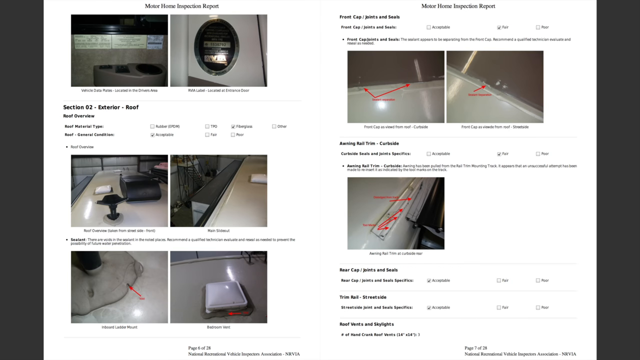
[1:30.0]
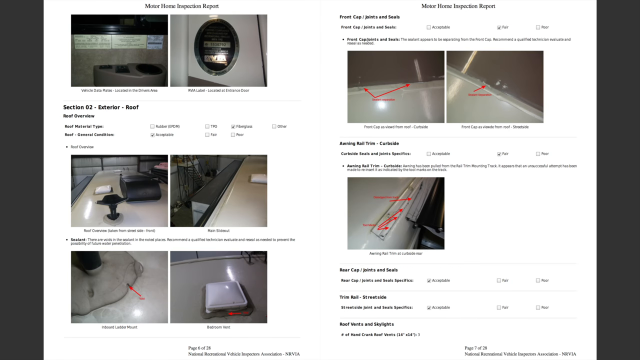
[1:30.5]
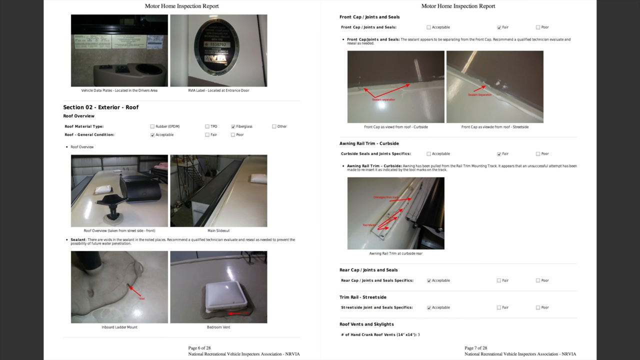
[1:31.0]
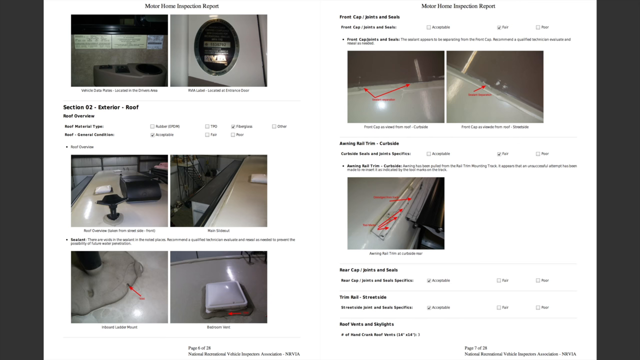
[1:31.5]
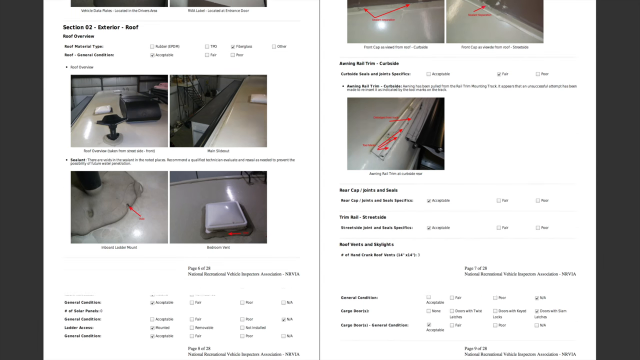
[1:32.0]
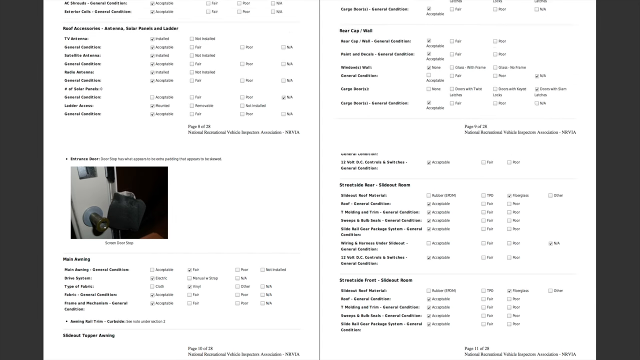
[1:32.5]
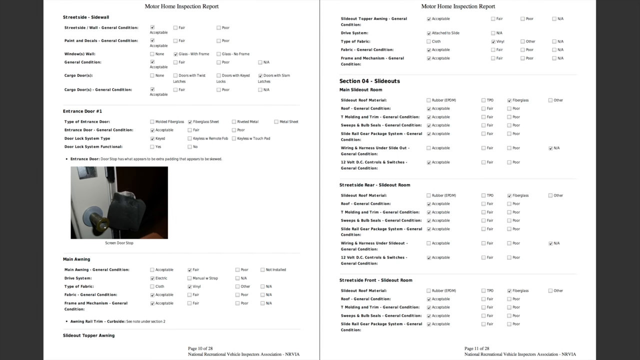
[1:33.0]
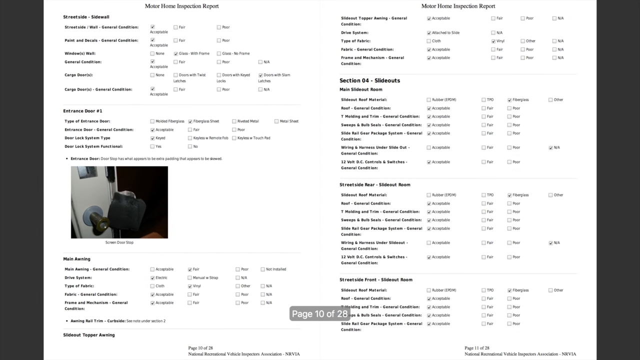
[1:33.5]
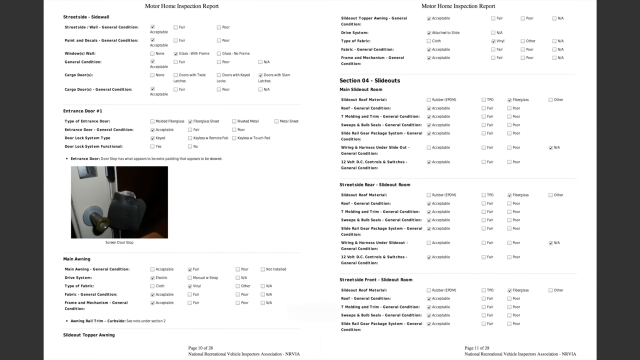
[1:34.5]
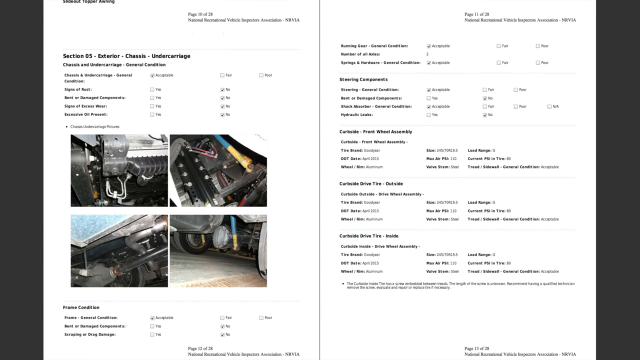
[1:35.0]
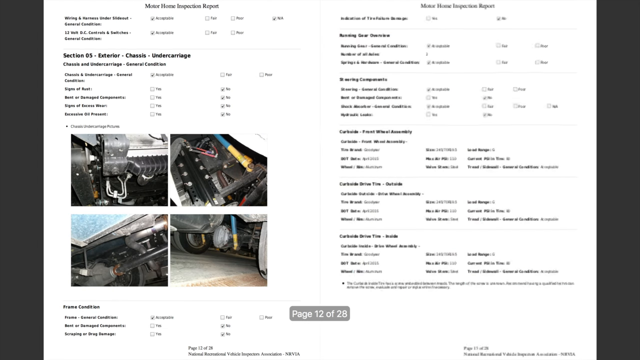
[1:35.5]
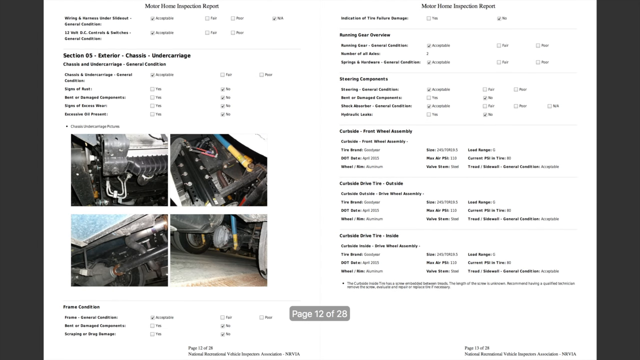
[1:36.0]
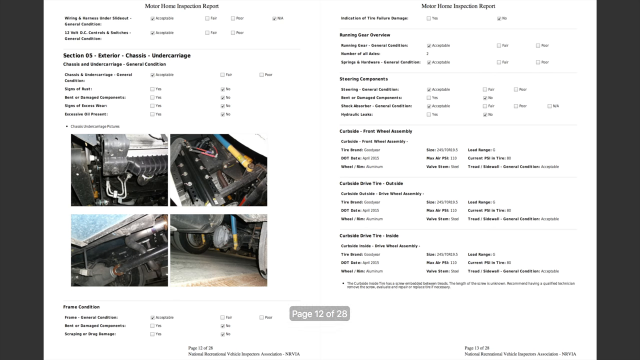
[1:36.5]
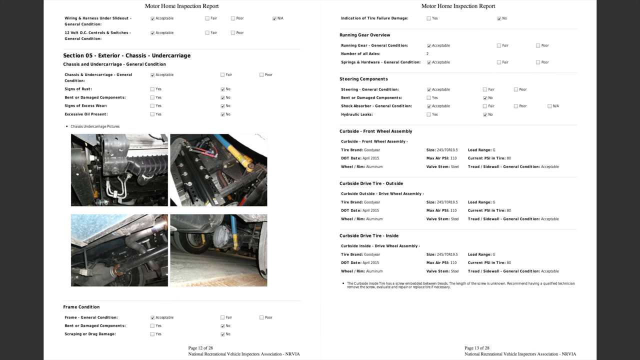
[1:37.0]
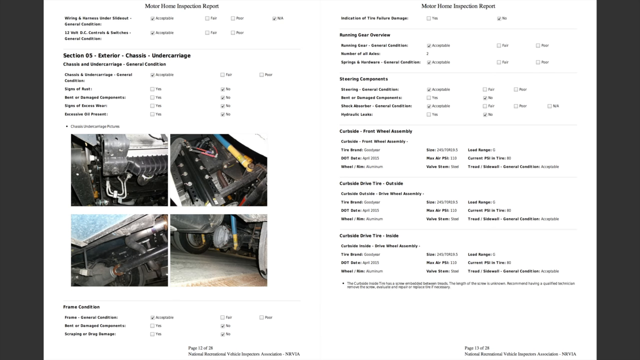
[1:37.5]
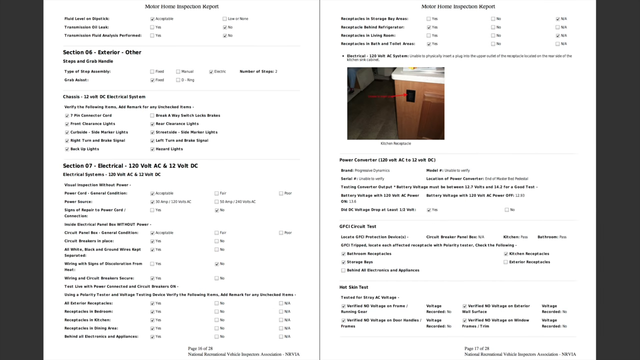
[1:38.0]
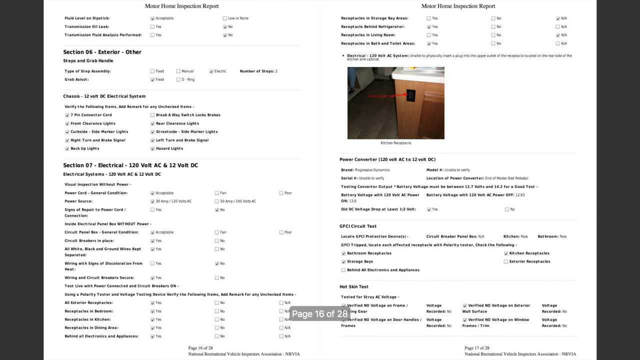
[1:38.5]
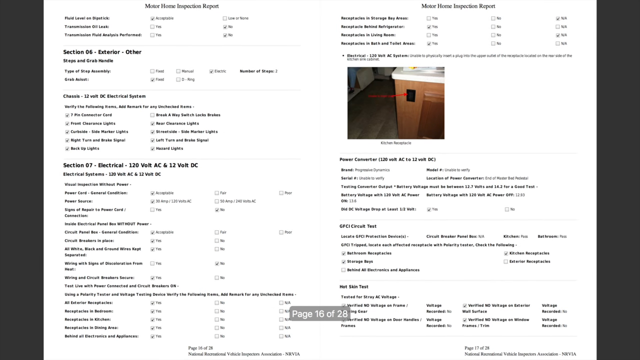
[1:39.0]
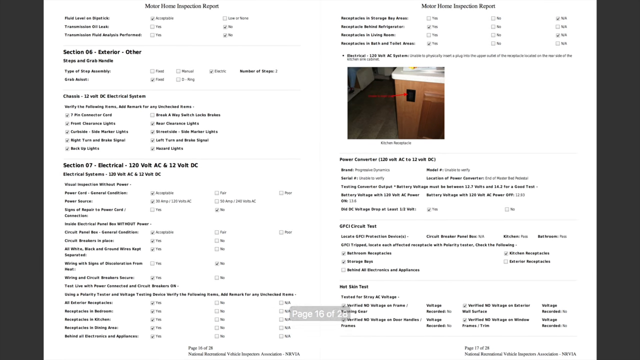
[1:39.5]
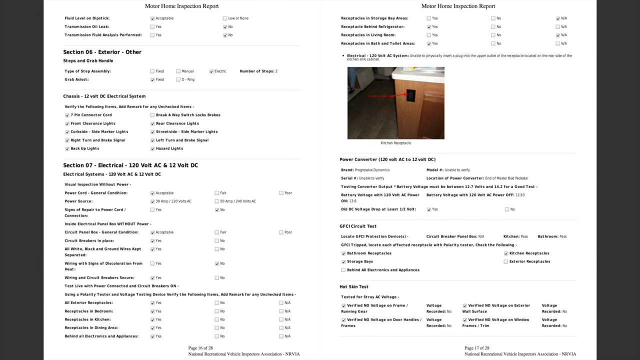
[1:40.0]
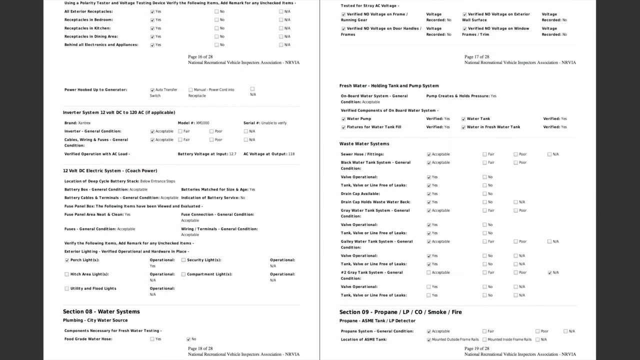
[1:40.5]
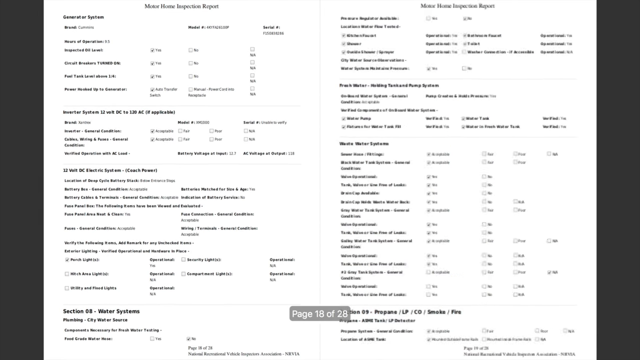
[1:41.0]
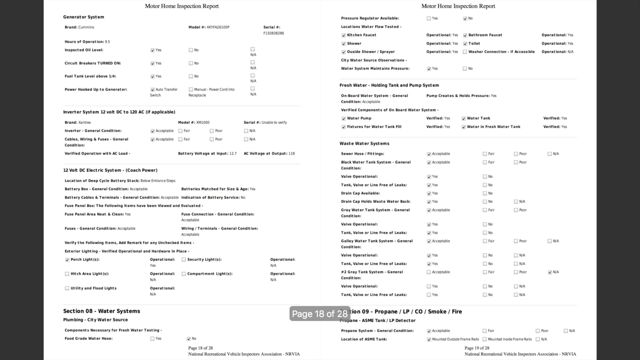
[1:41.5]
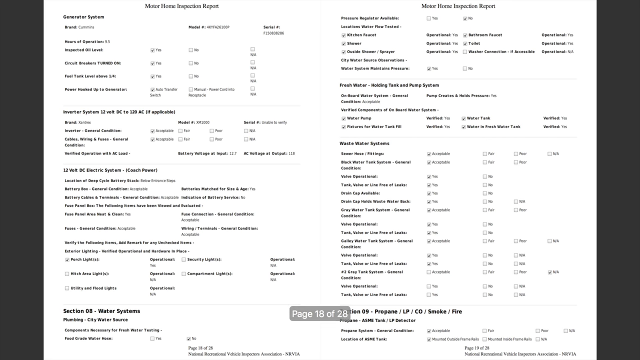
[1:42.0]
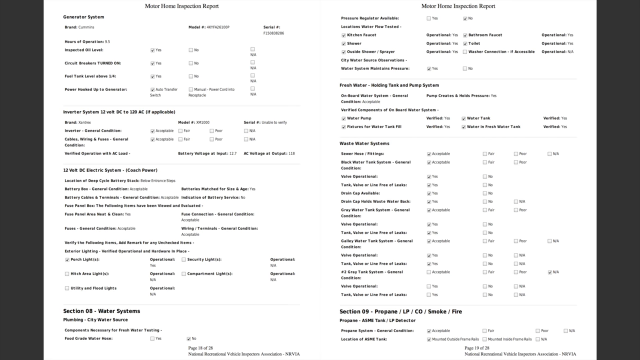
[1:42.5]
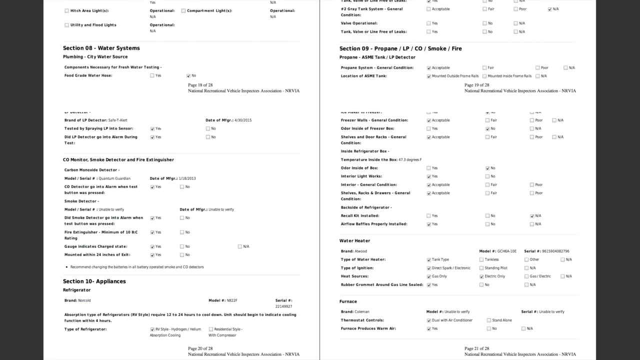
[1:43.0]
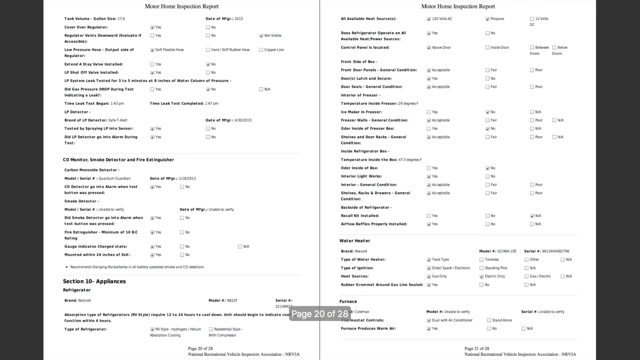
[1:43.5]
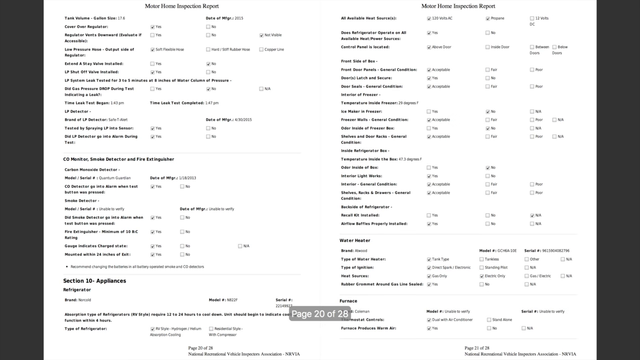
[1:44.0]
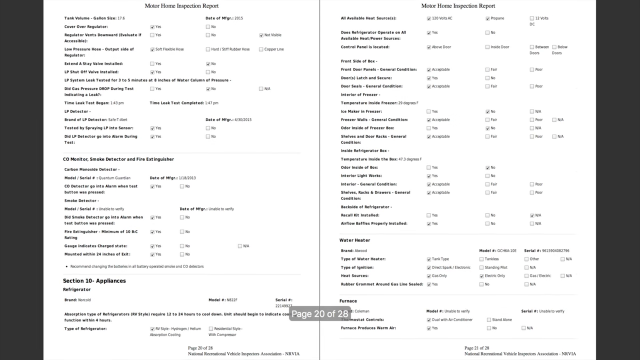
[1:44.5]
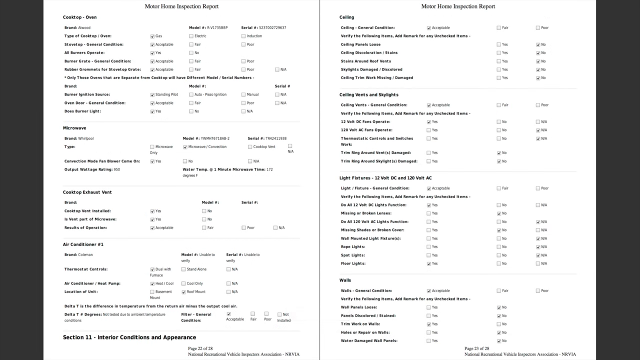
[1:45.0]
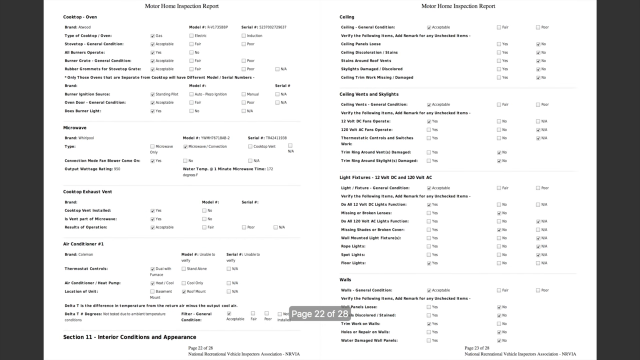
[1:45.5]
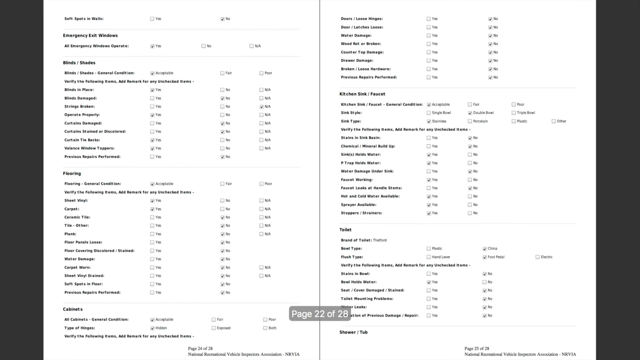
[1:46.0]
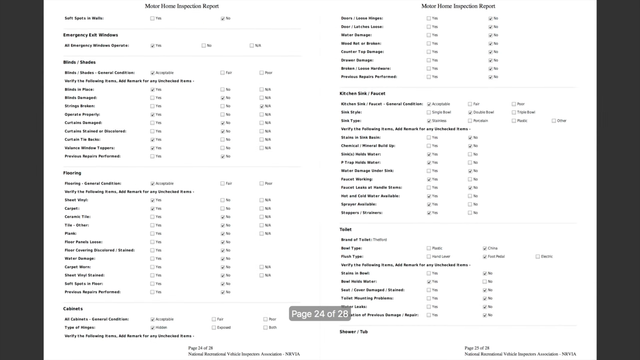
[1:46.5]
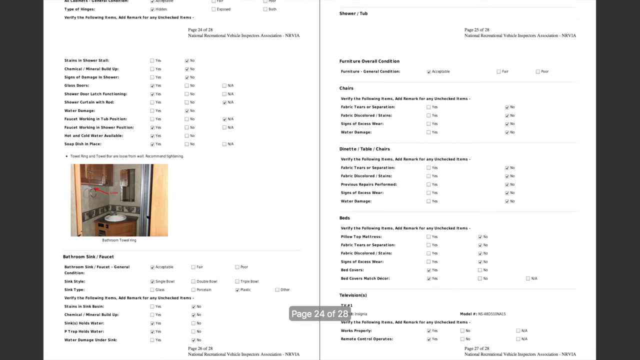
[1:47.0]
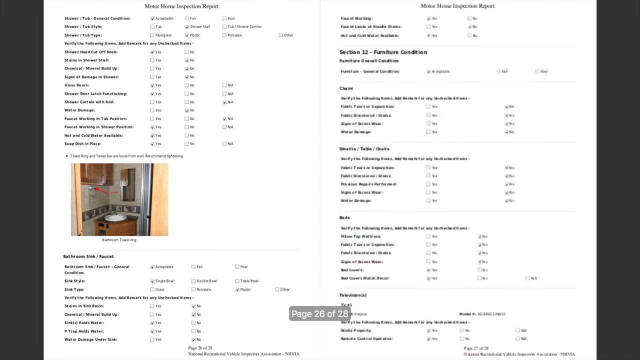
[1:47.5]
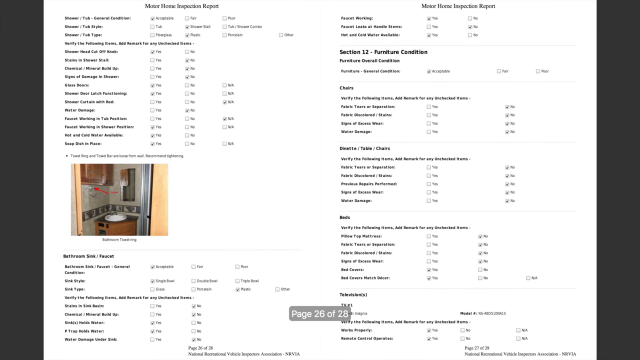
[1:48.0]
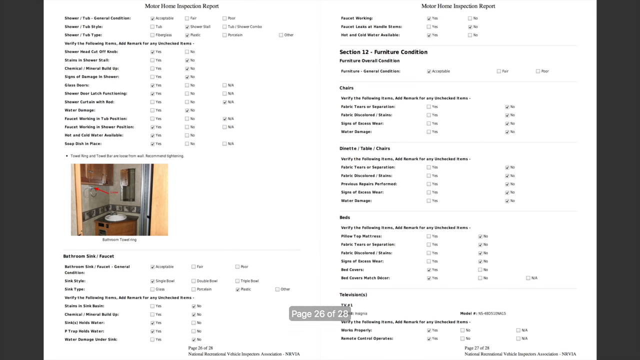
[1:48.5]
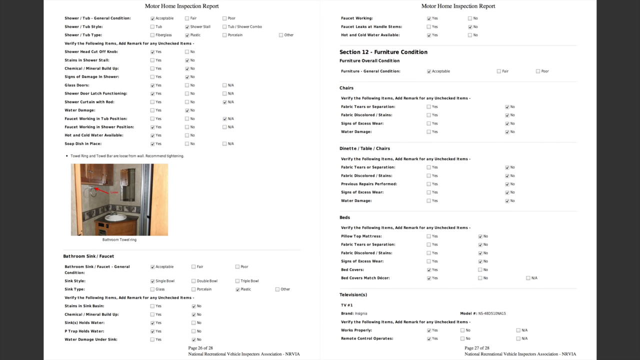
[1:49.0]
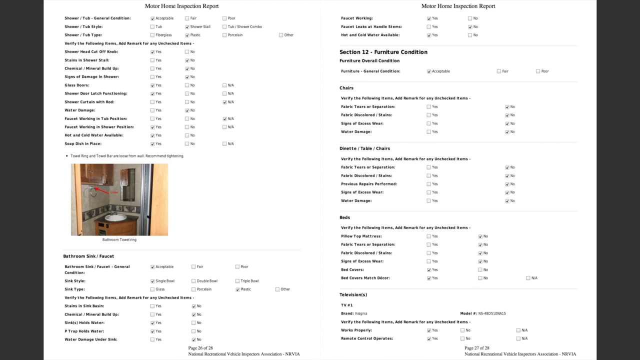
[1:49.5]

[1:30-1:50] More of these pages are shown: several pages with different checkboxes that can be checked off. There appear to be 28 pages, seemingly a single booklet for the same RV, apparently covering what will be done with the RV and what to look for. Several pictures on the pages have red arrows pointing to specific things. It may be an inspection sheet to fill out before using the RV.